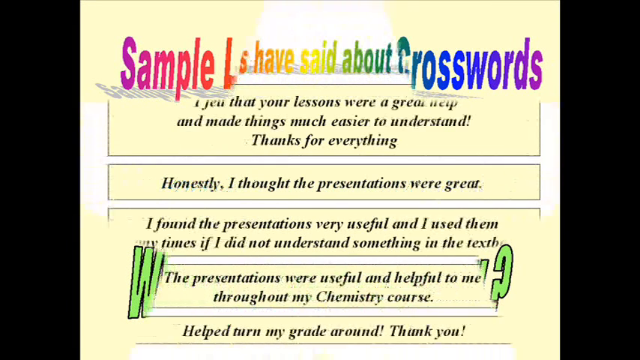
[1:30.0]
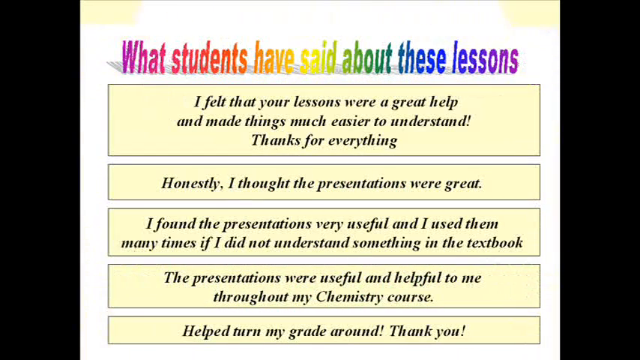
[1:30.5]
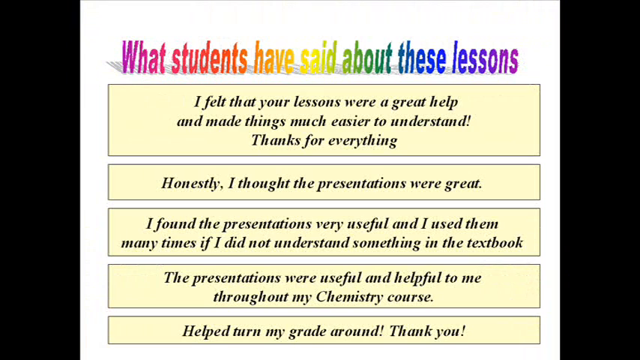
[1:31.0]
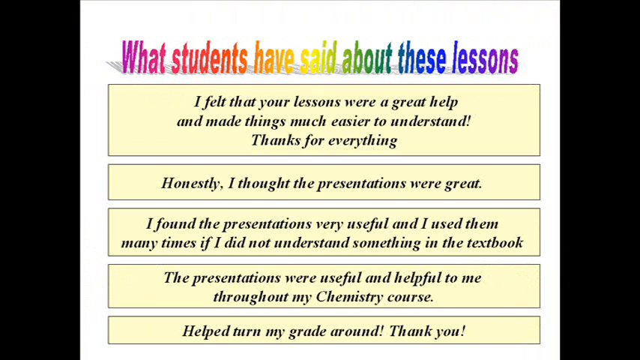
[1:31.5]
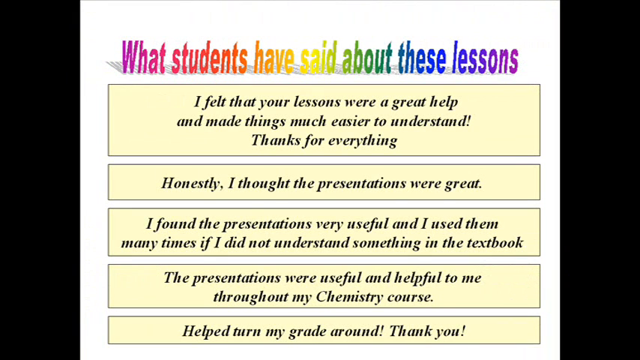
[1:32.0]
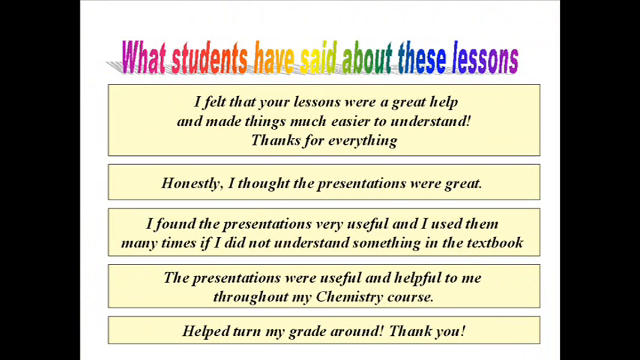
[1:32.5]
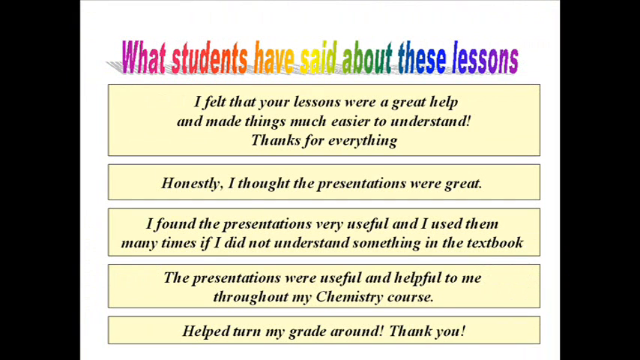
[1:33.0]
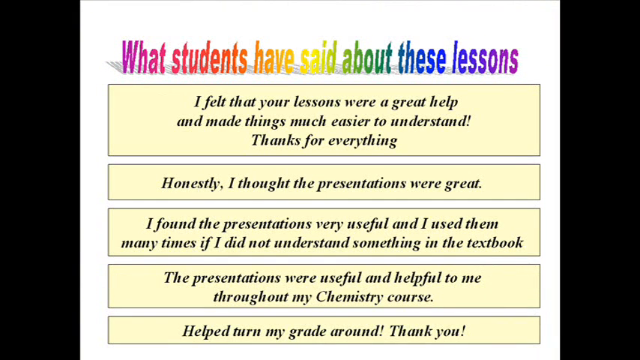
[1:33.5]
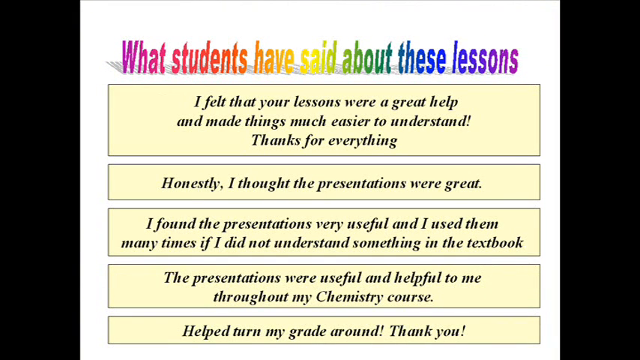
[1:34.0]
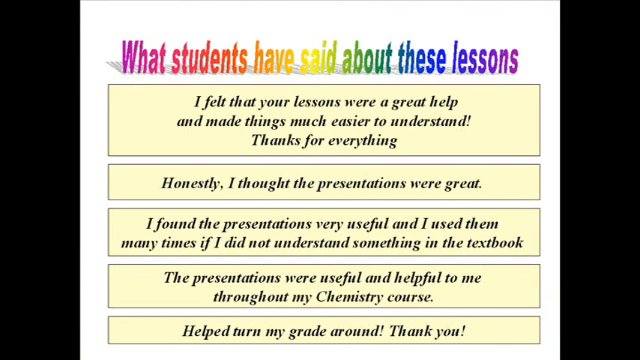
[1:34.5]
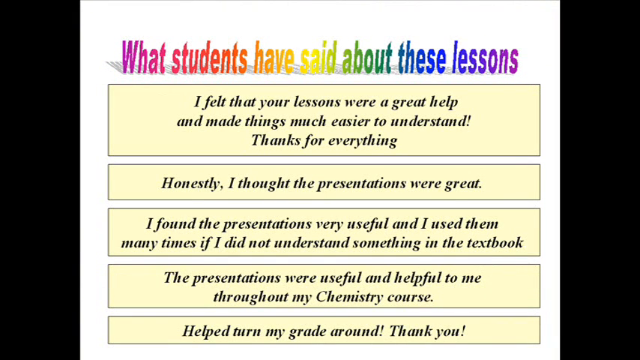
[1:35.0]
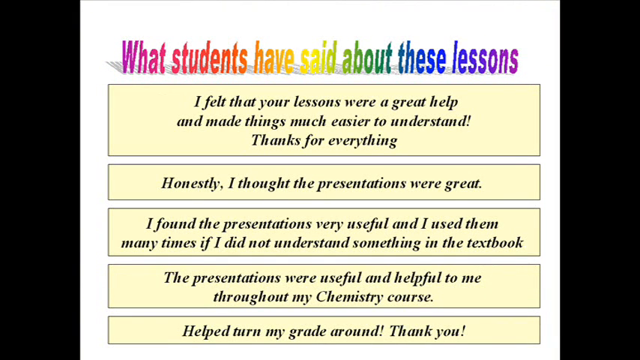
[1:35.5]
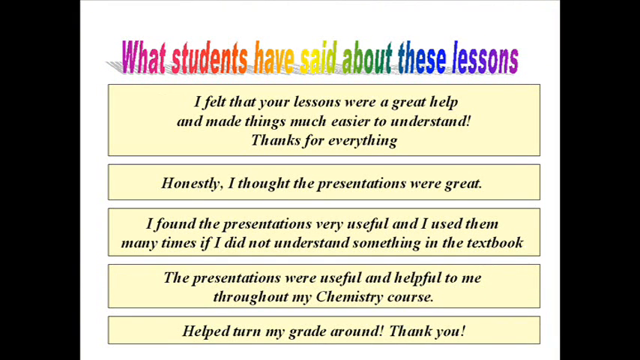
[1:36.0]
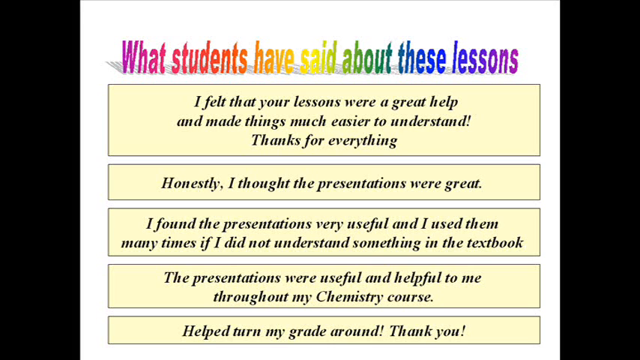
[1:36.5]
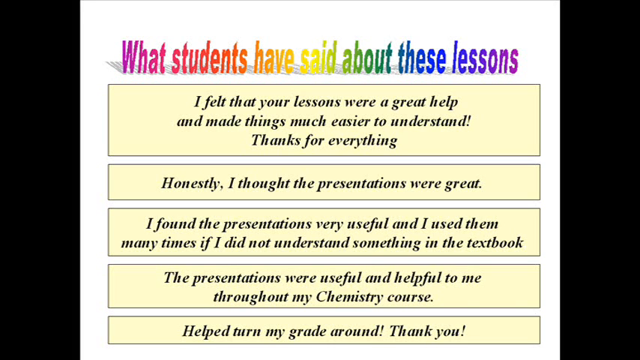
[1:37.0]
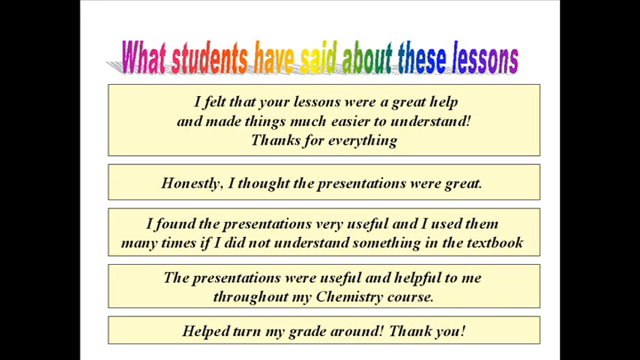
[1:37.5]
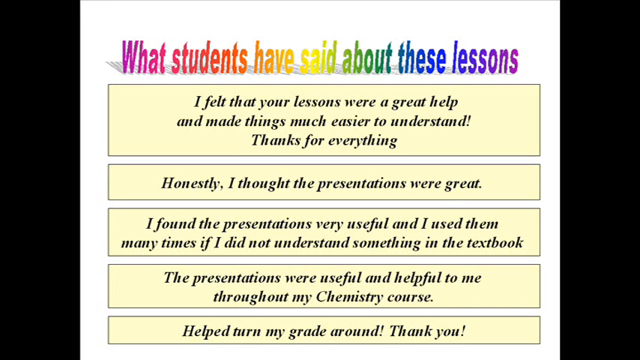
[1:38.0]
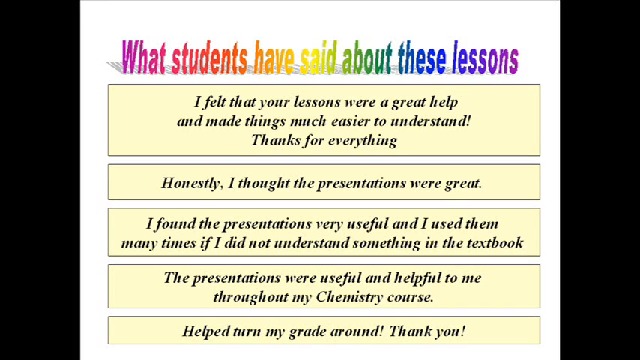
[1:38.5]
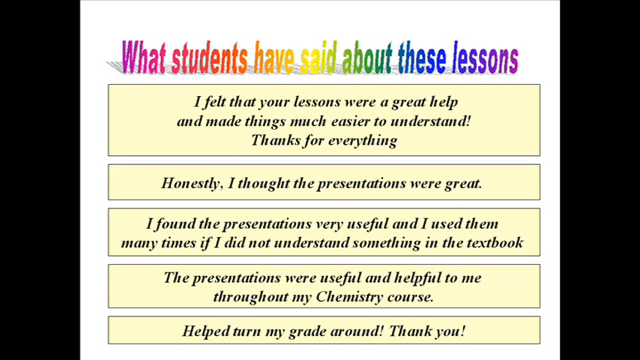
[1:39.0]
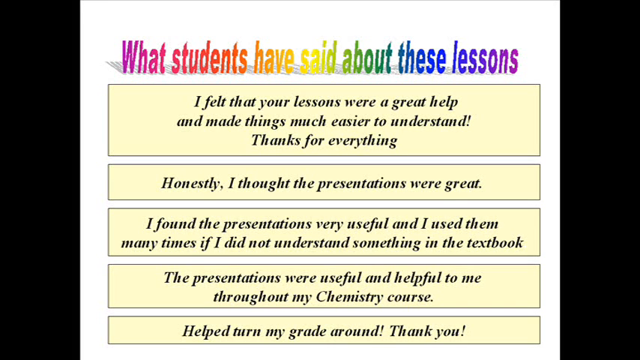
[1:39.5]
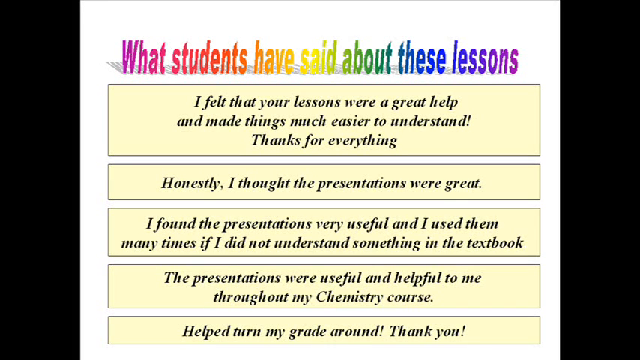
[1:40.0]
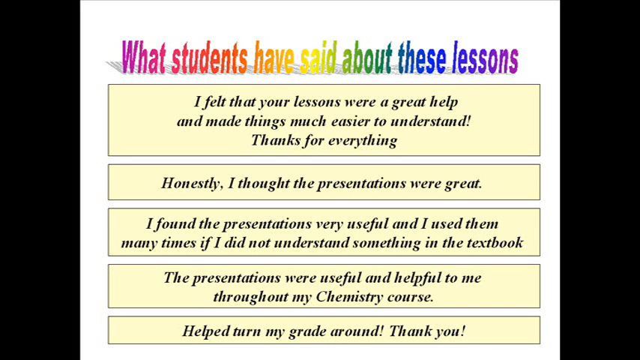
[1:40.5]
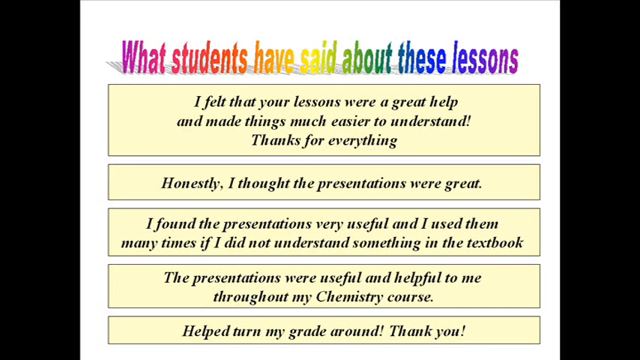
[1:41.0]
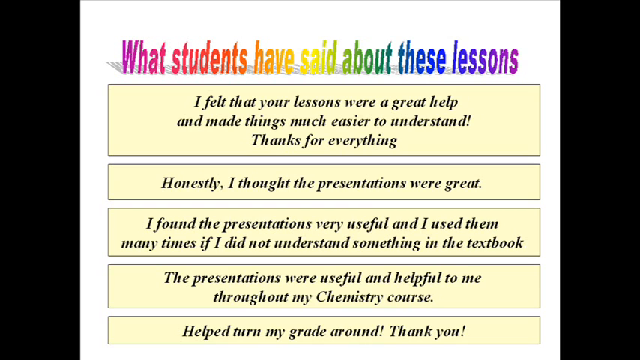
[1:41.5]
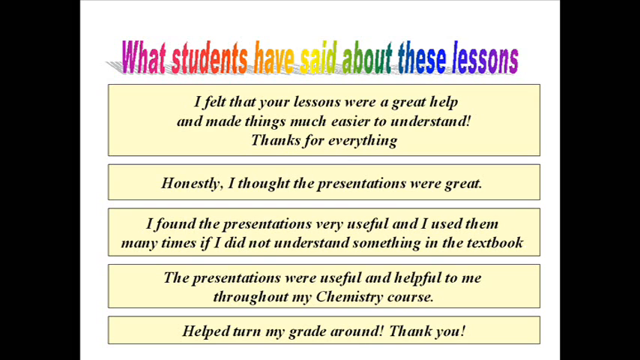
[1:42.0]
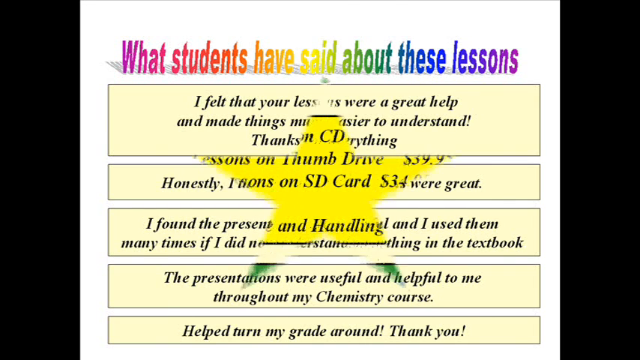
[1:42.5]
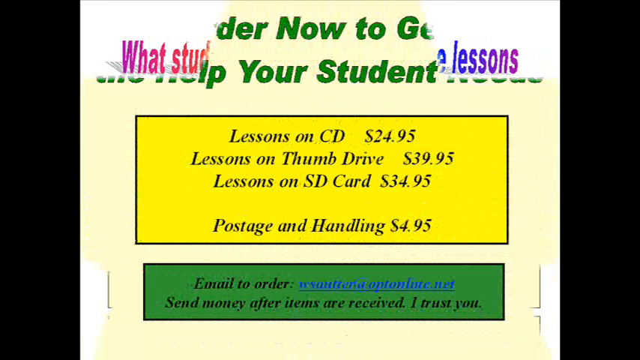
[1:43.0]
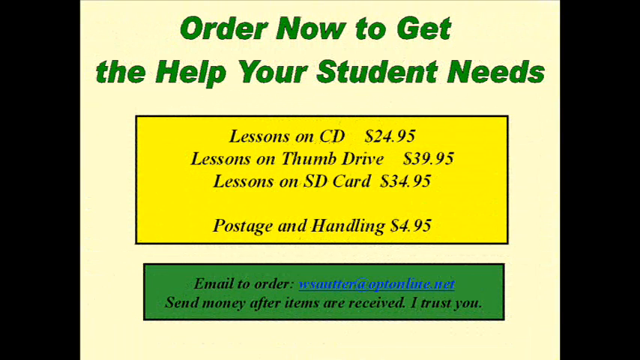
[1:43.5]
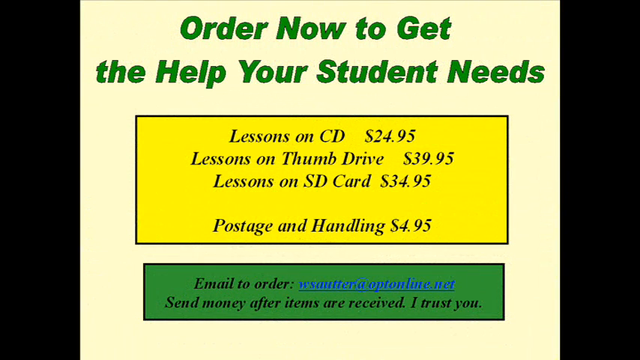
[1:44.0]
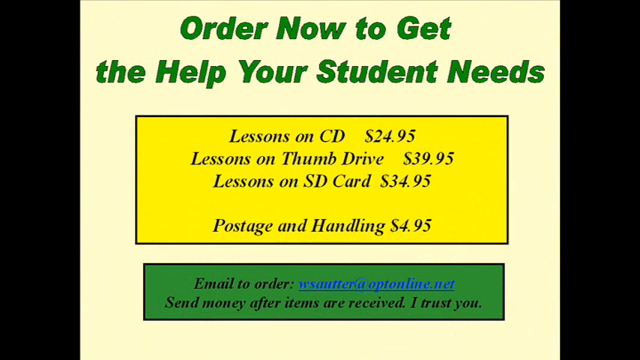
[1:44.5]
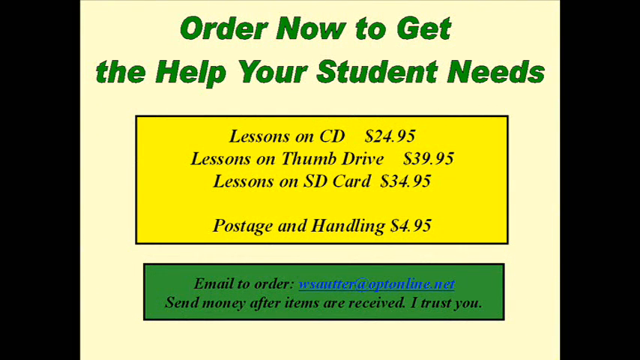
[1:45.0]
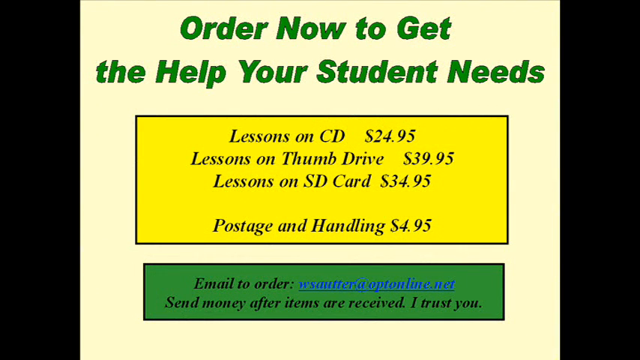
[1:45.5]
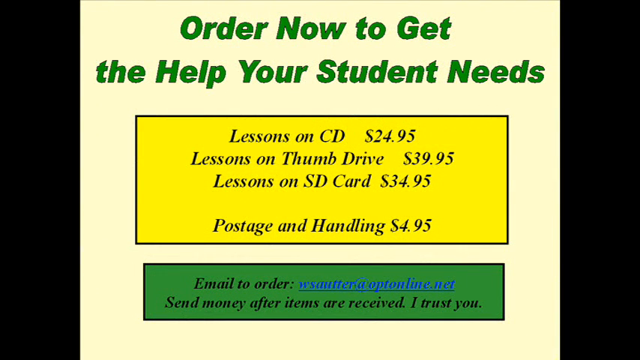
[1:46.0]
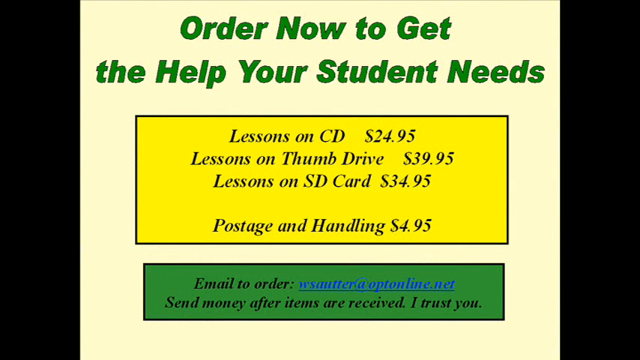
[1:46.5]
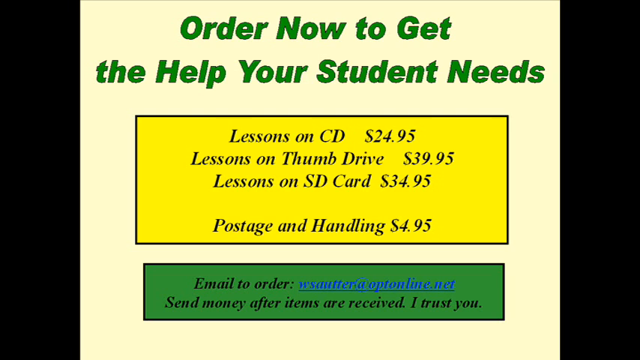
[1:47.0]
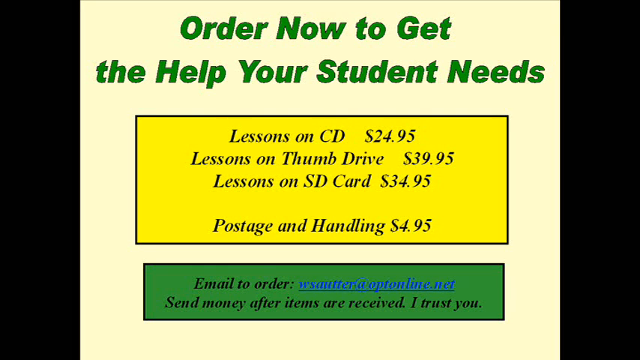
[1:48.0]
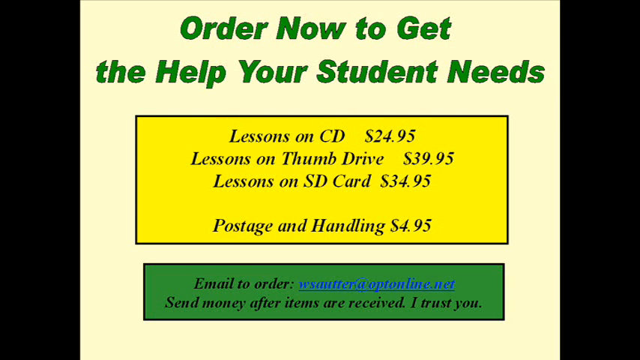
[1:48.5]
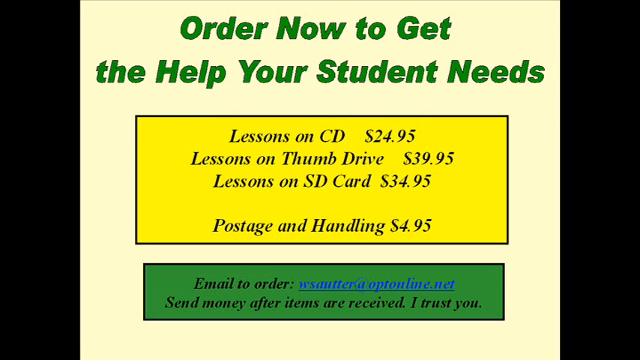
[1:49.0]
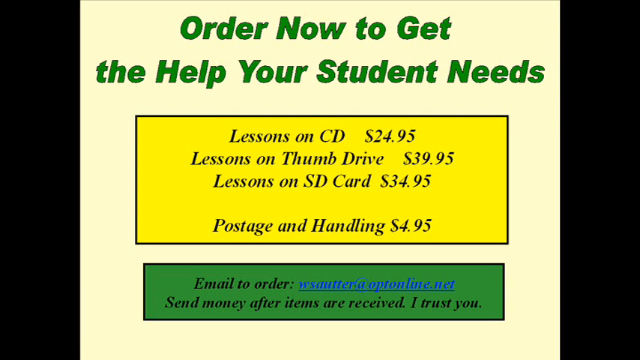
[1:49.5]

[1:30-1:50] The star transition completes, revealing a new image with a white background and a title at the top reading "what students have said about these lessons," also in a rainbow gradient. Below it are five yellow text boxes containing black words: reviews from students or people who have learned with these lessons, all positive, saying everything was great and very useful. The star transition comes again, revealing a new image with a yellowy-beige background, with some text and a title at the top and two text boxes right below.